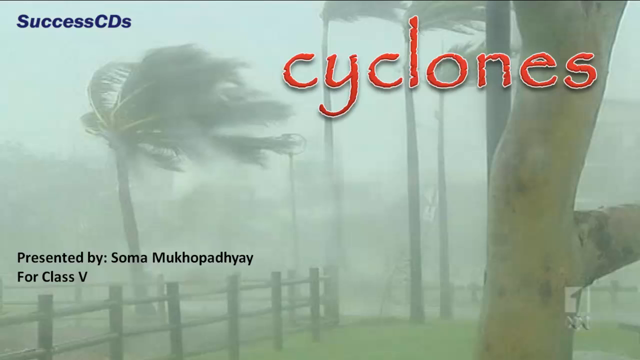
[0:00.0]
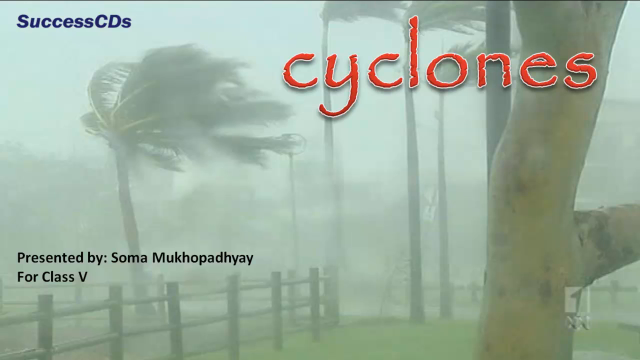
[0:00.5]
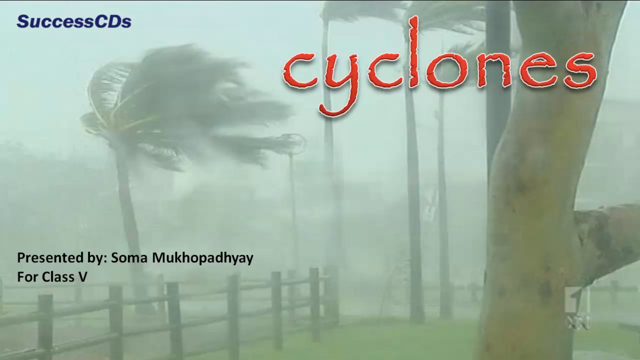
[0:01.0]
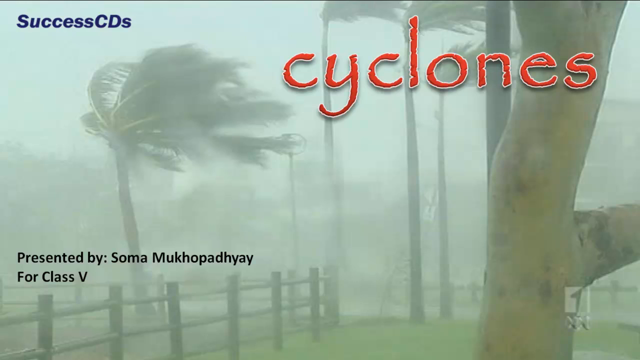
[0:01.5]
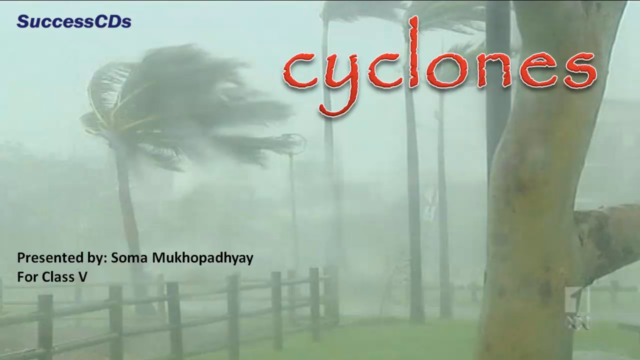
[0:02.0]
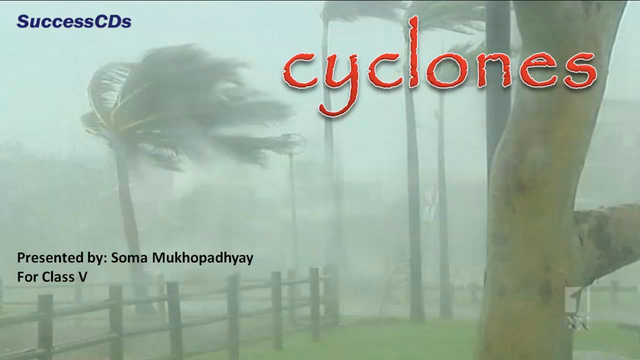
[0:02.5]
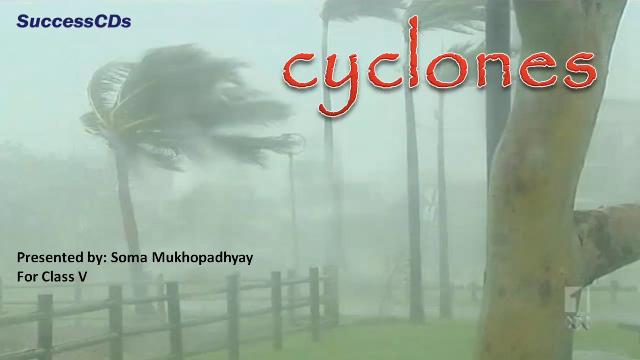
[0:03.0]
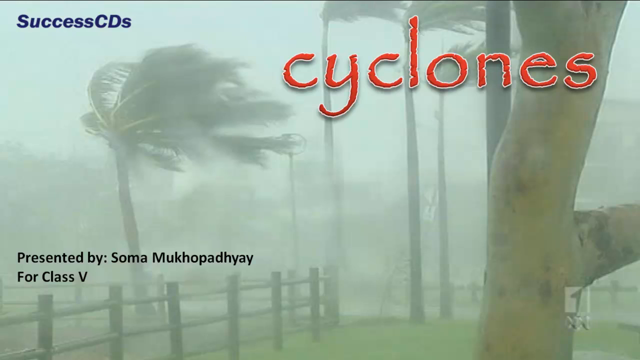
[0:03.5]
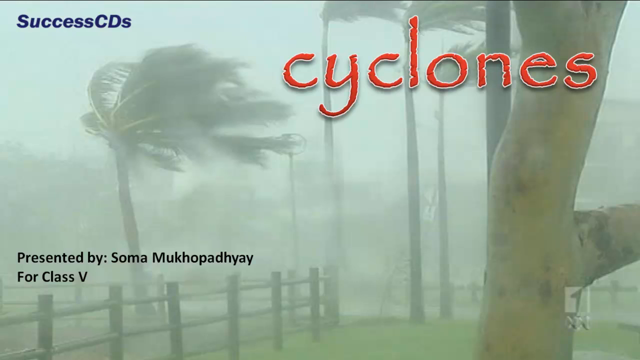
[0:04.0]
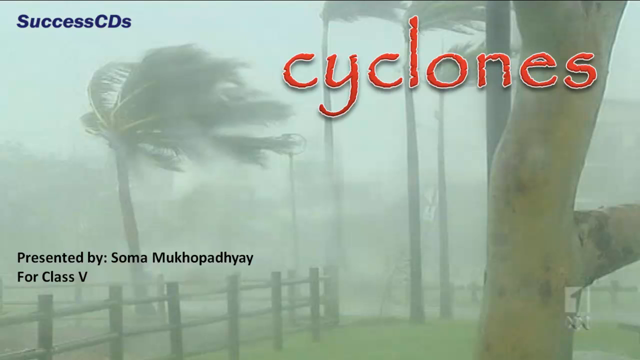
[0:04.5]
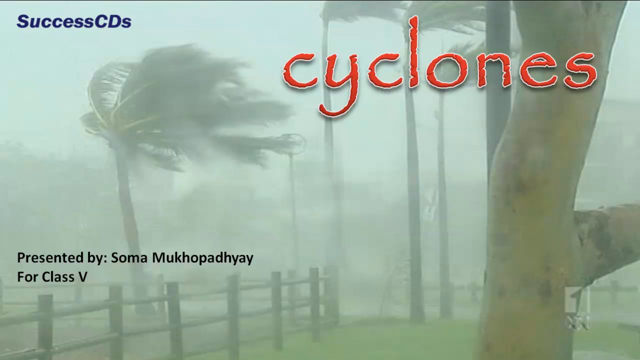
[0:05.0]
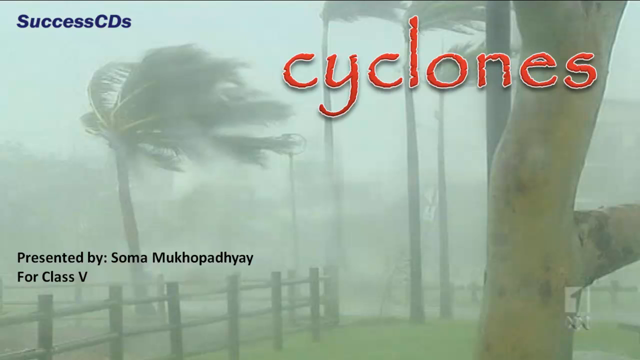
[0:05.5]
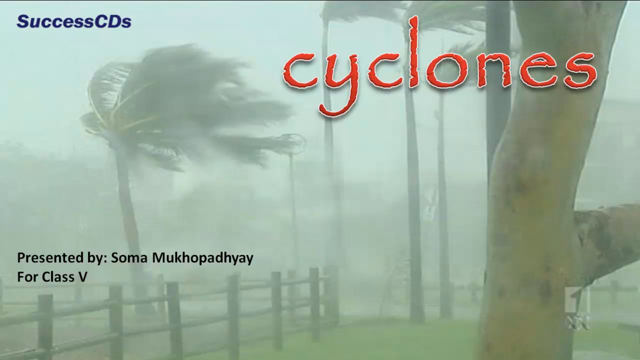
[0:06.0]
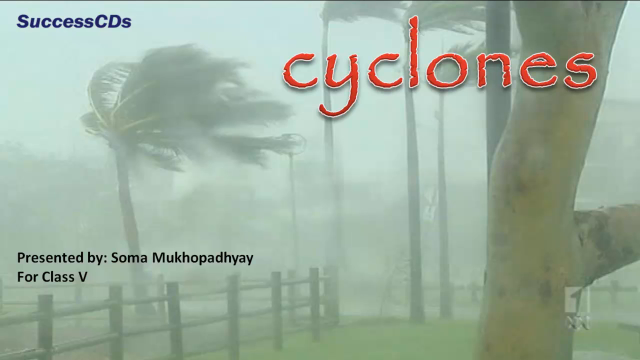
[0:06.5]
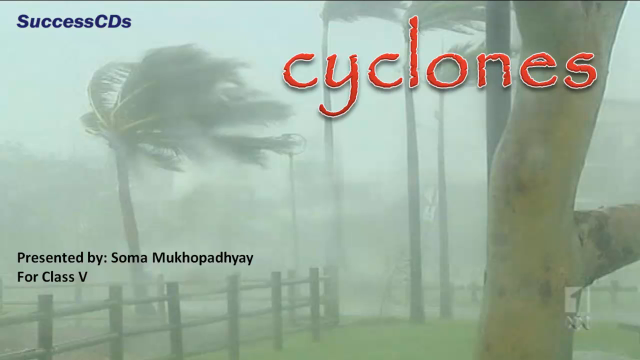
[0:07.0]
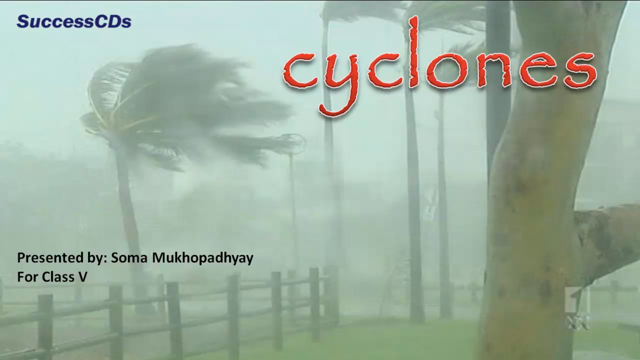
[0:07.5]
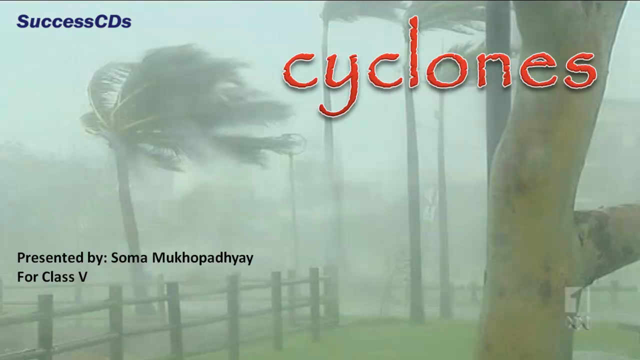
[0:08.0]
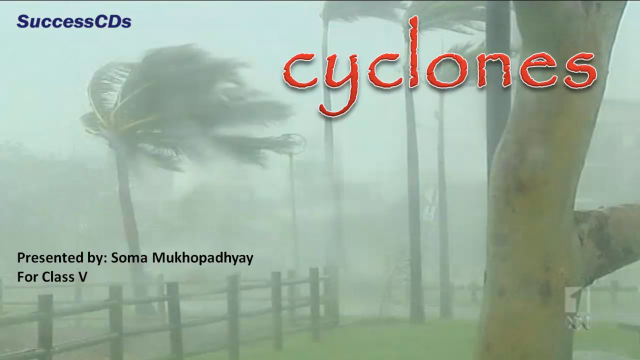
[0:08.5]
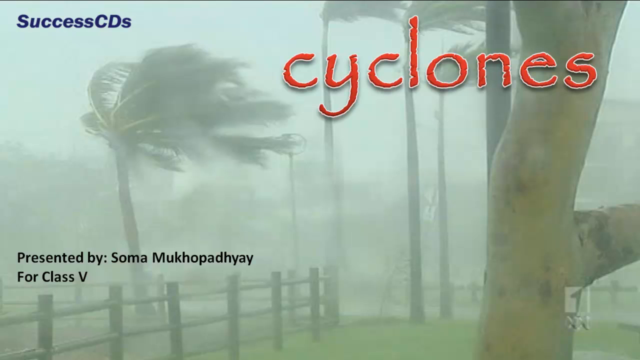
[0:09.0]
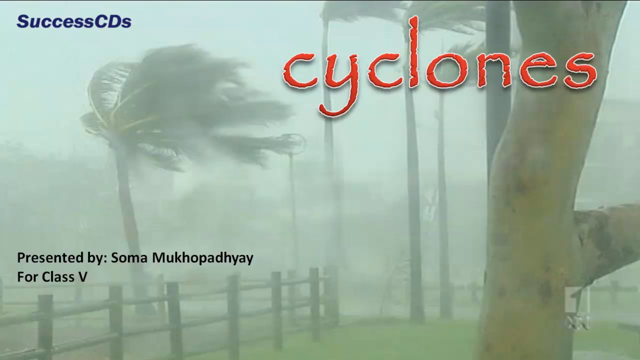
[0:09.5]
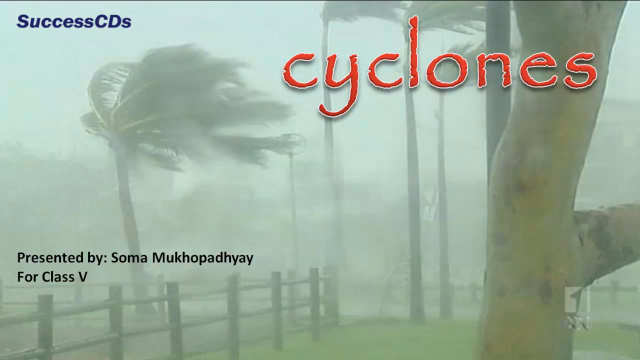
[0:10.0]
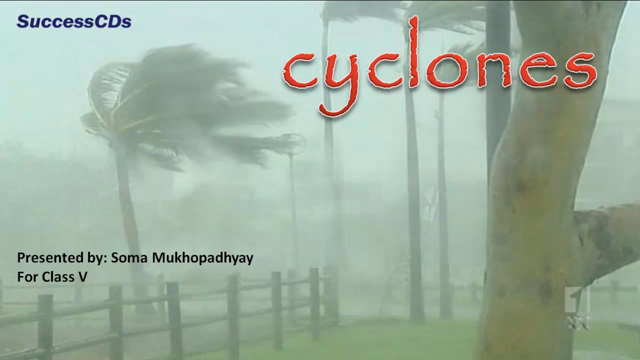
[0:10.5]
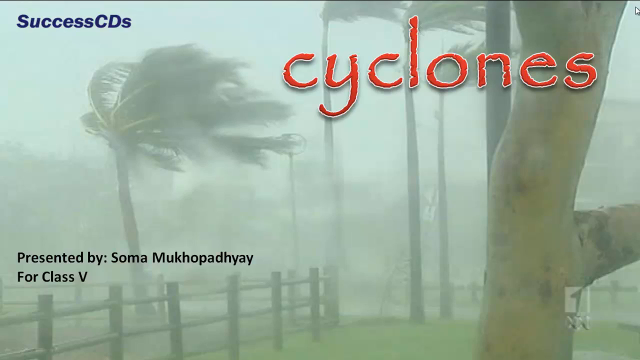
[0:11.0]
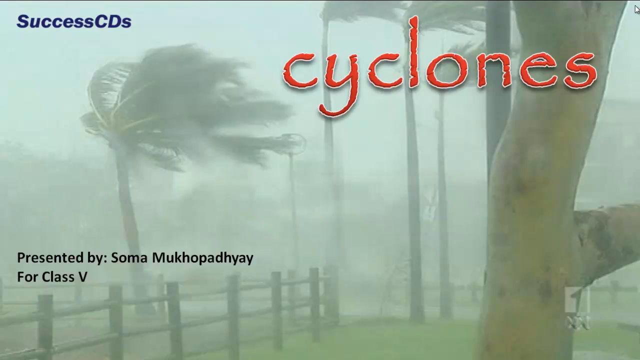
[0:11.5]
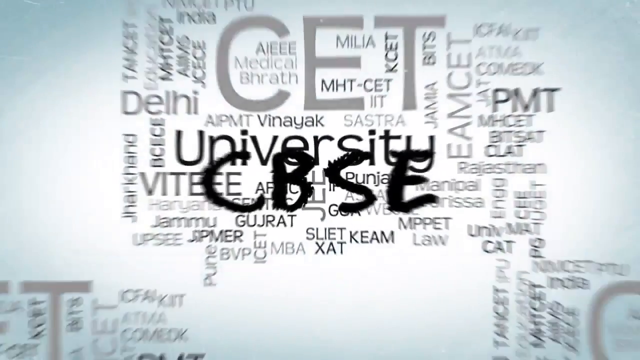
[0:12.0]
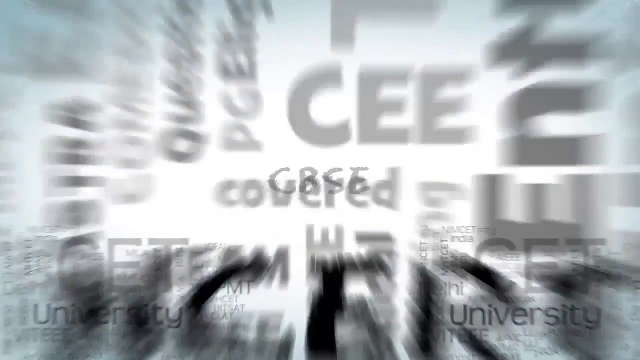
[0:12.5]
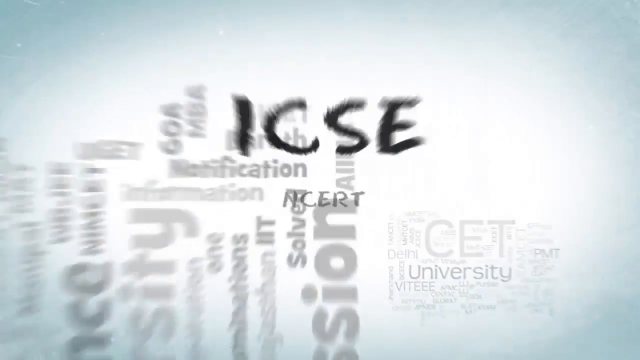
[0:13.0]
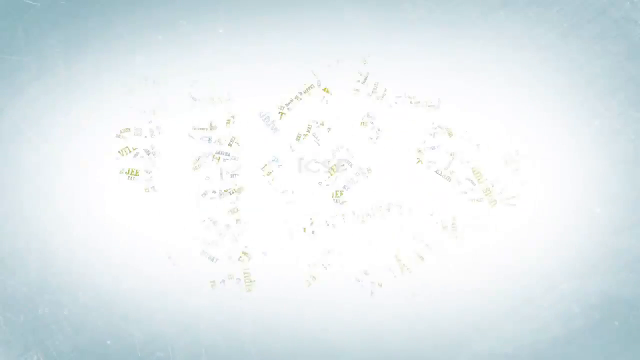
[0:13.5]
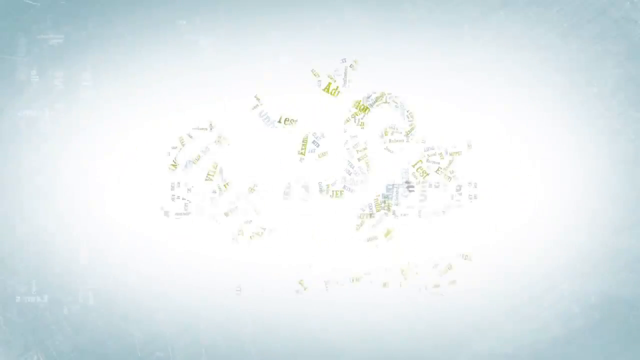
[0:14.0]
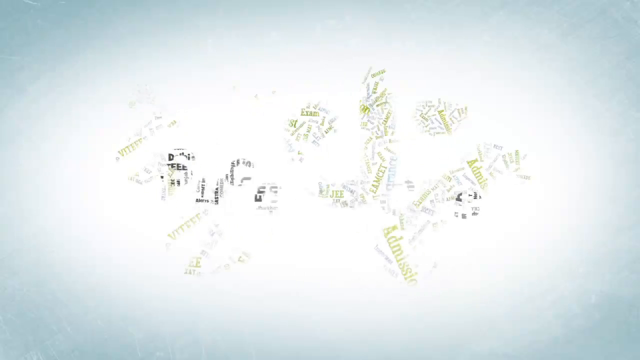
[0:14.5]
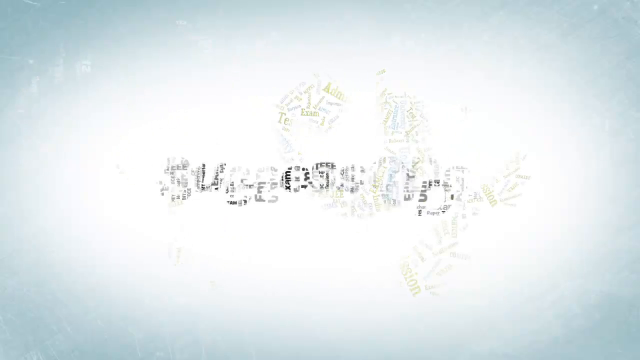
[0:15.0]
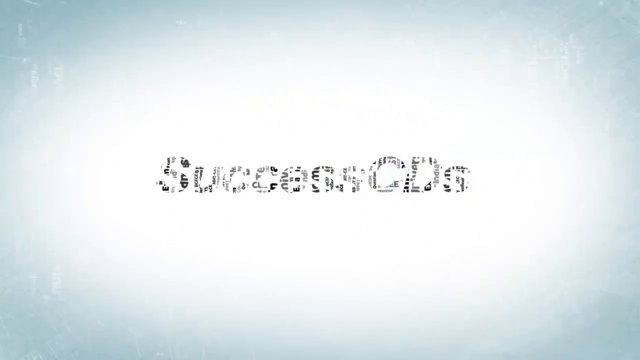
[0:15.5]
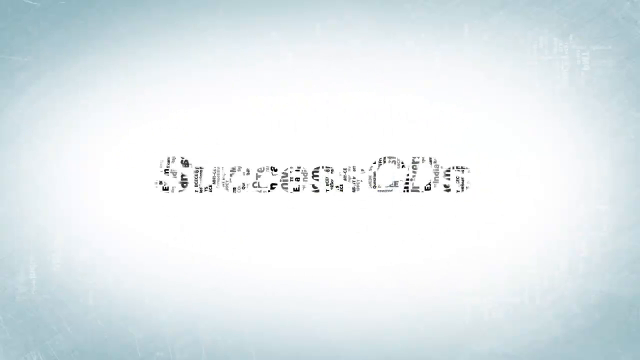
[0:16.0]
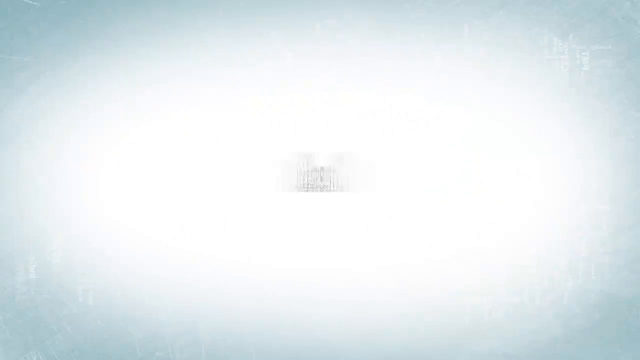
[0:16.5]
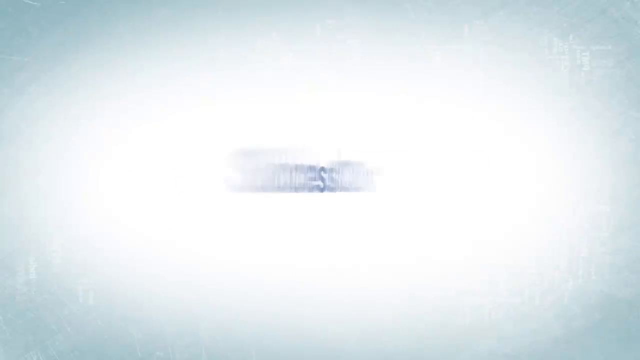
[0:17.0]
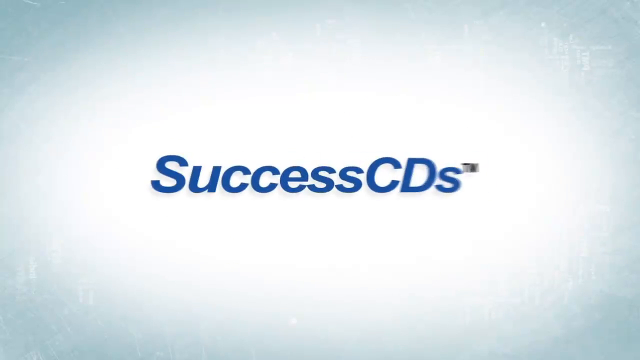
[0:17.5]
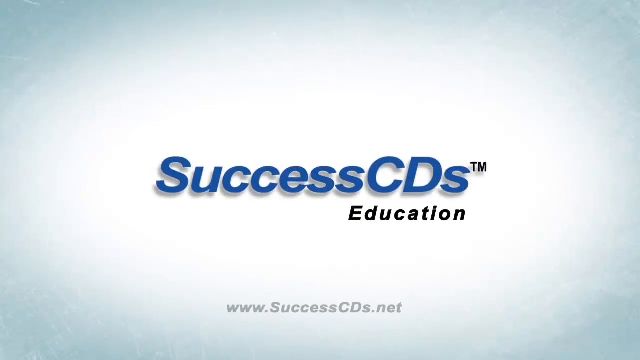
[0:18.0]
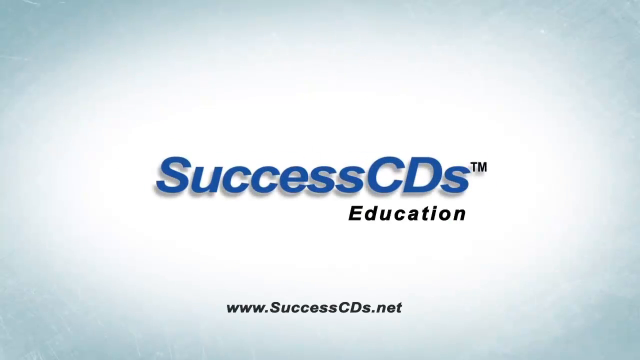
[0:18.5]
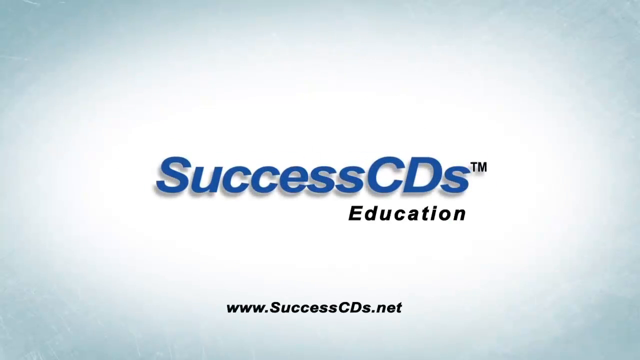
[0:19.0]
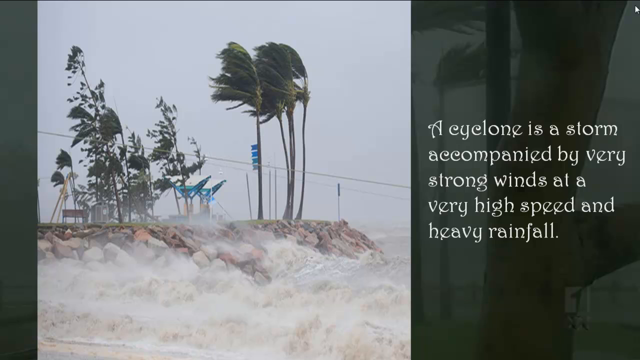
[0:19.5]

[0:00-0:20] The video opens with a success CD title: Cyclones, presented by Soma Mukhopadhyaya for class five. Palm trees are struck by a very strong wind. A sequence of many words follows, such as CAT, university and others like them. The success CD logo then appears and spins into a blue logo. On the next slide, text on the right says a cyclone "is a storm accompanied by very strong winds at a very high speed and heavy rainfall." On the left, a couple of very tall trees are struck by the wind and are falling back. On the shore there are some rocks, with some mist close to them from being near the water. Some signs are visible behind the trees.